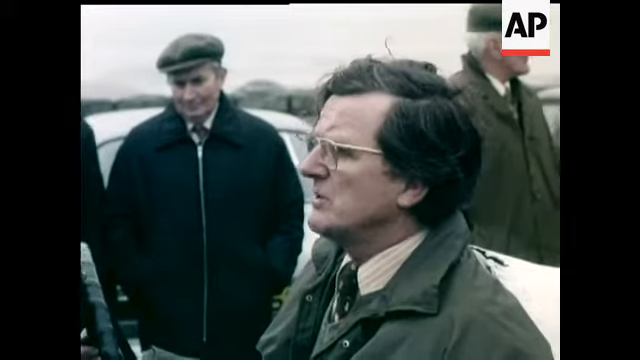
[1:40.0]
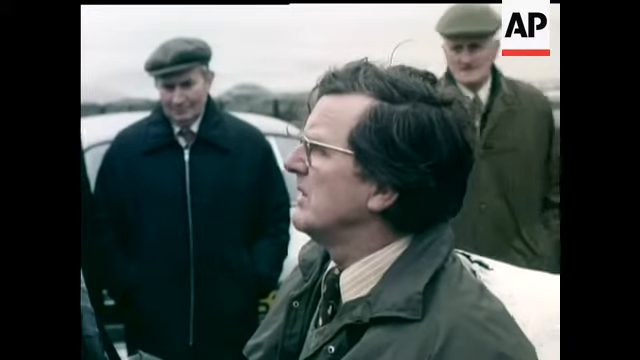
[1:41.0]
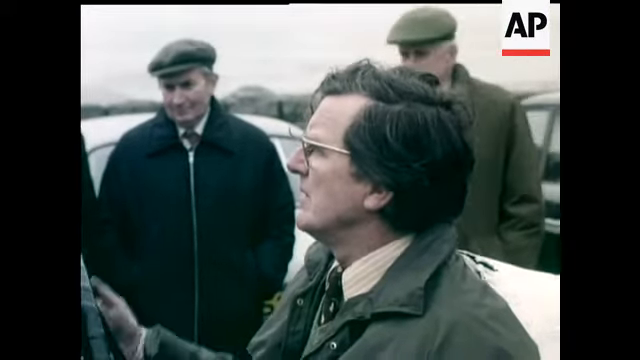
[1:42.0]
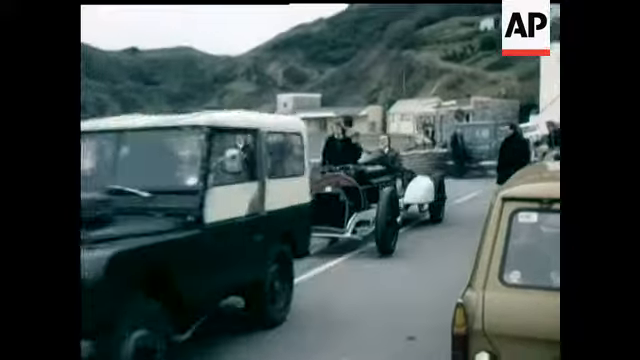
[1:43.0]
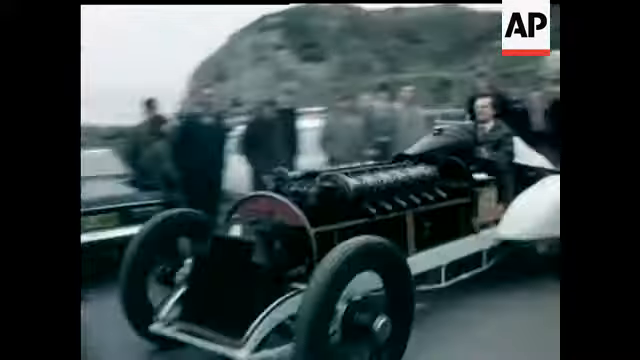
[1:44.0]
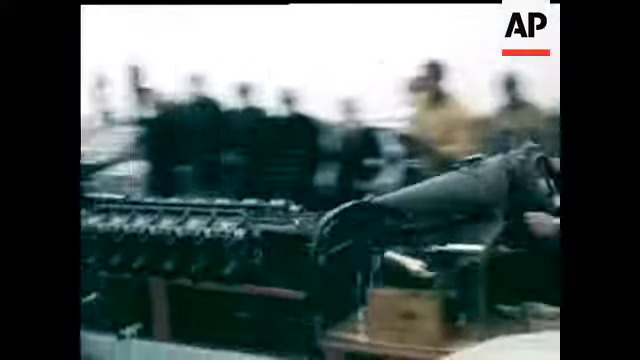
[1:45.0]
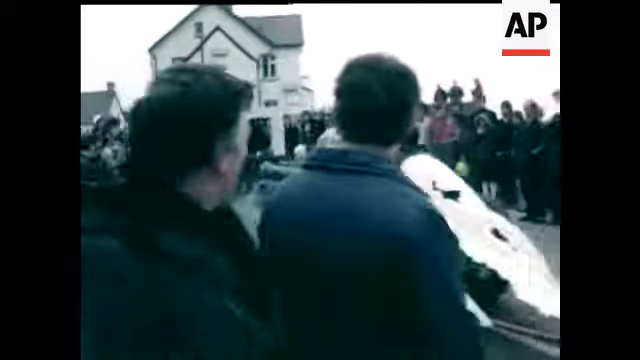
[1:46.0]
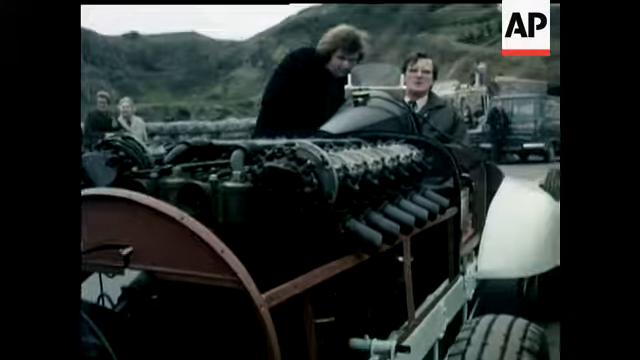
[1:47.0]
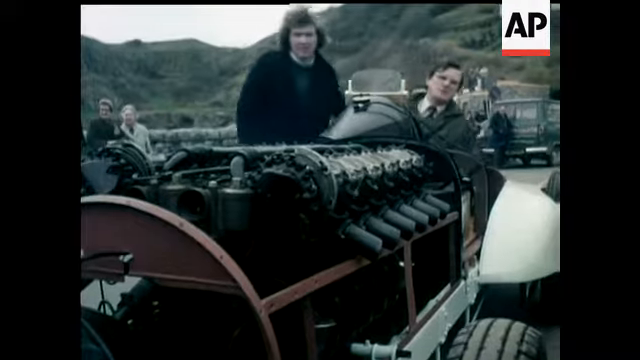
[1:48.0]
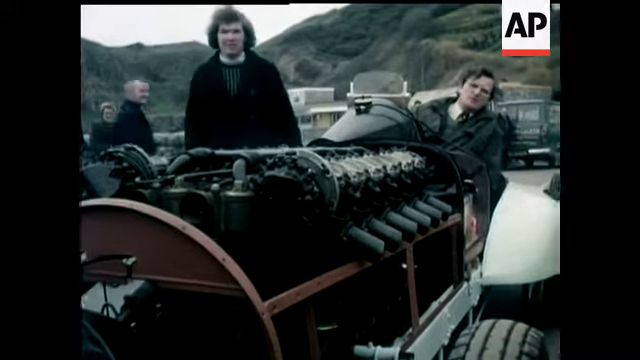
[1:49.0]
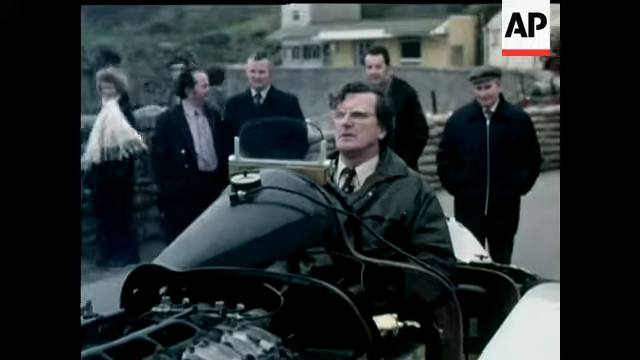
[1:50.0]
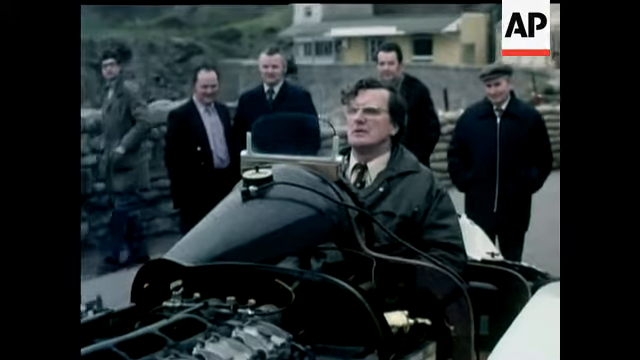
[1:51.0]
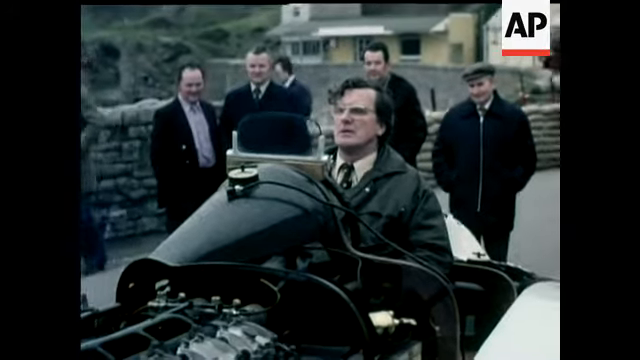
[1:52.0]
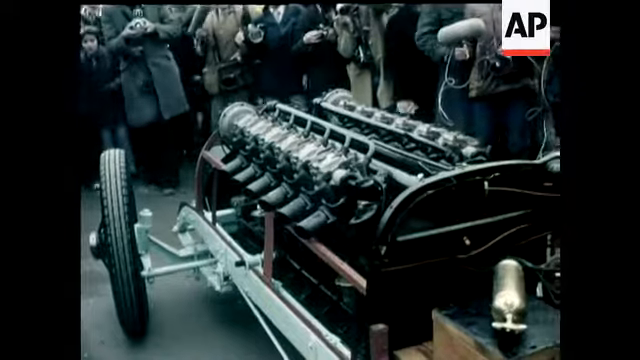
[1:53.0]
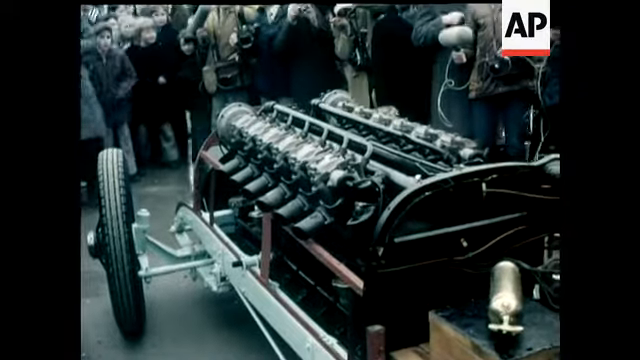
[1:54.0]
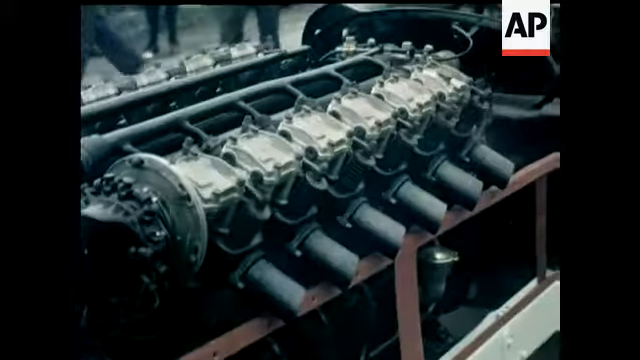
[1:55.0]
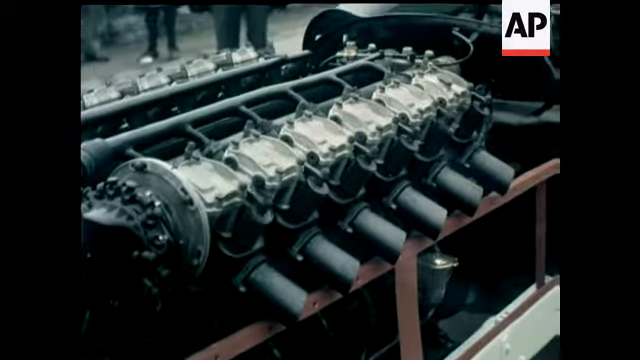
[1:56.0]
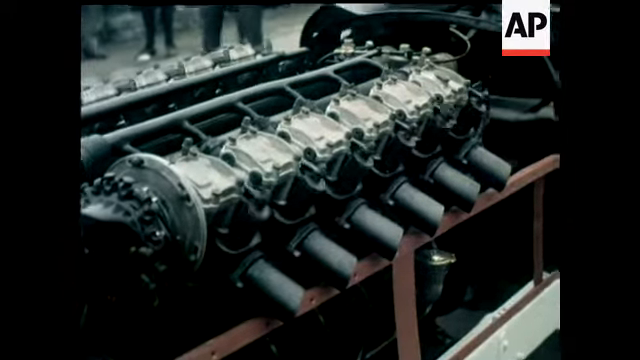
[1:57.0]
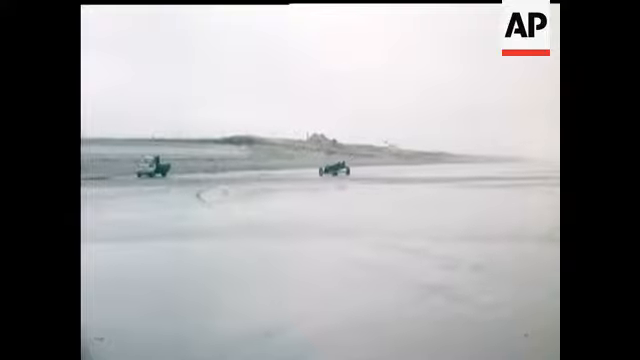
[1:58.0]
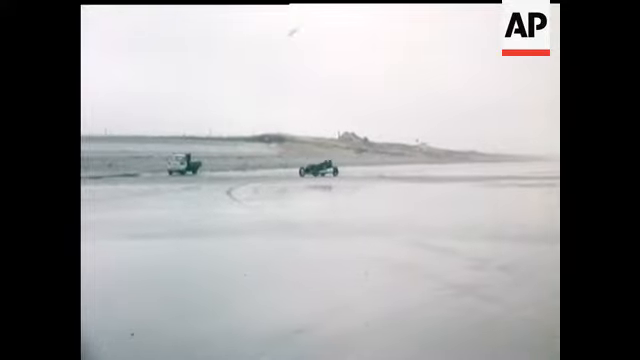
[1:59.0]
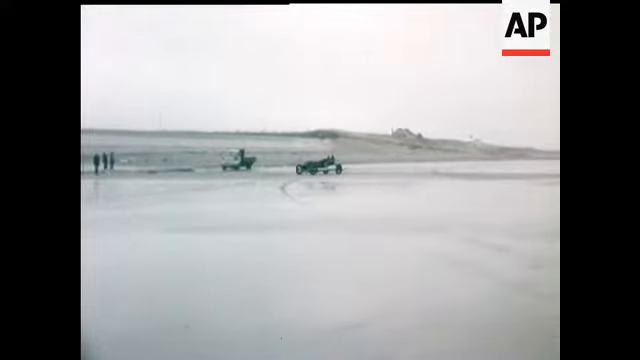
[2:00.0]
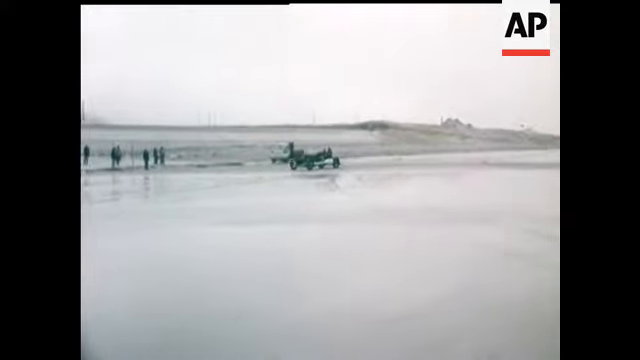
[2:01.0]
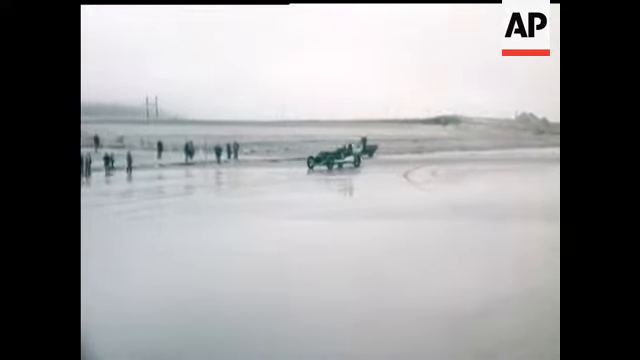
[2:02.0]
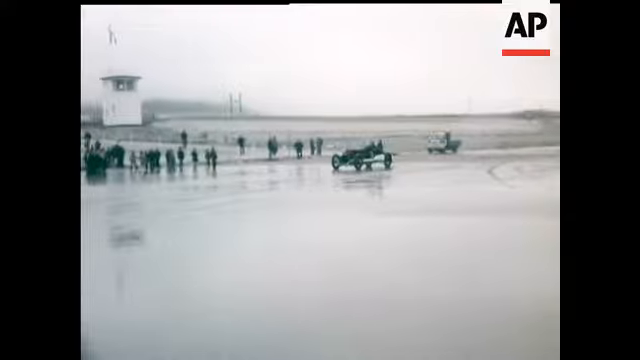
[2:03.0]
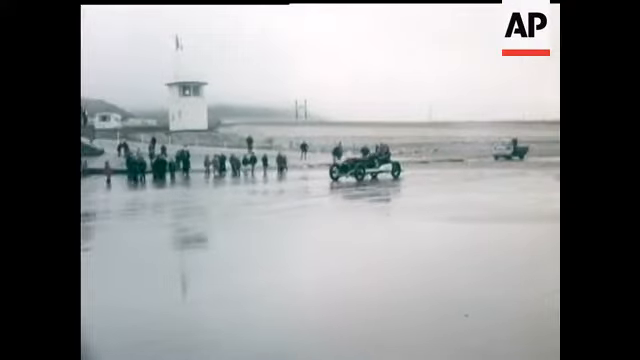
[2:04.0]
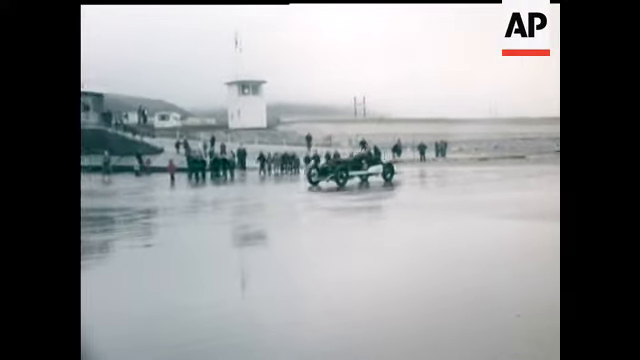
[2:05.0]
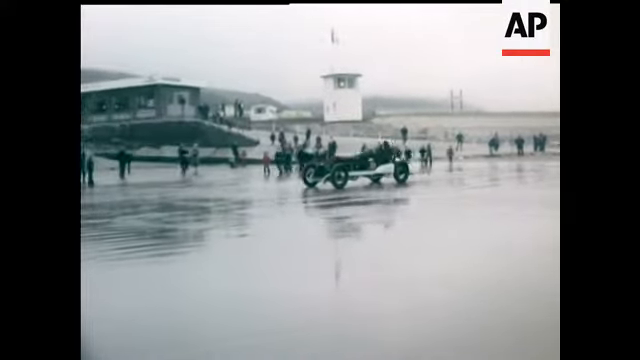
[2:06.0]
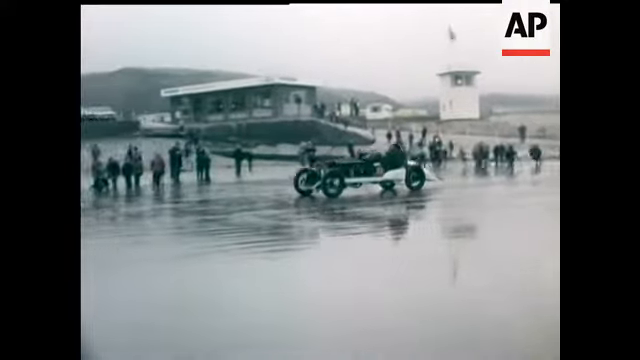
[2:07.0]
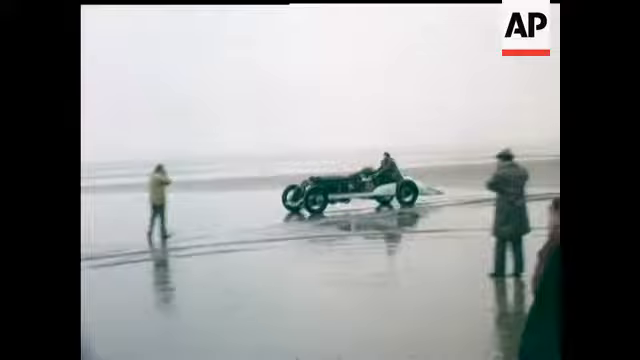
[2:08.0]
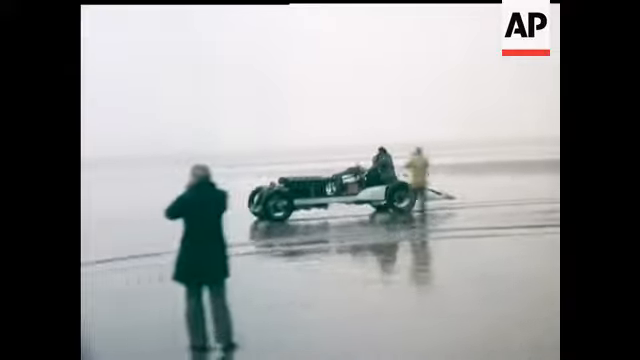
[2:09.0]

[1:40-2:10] The man behind the wheel appears to be speaking. The drag racer is pulled forward by another vehicle, with people lining both sides of the street. The man behind the wheel then appears to be trying to start the engine. The engine is completely exposed, with no hood whatsoever; it is long and takes up most of the chassis. A person stands to the left of the vehicle, and both appear to be Caucasian. The man behind the wheel looks like the man who was at the site where the car was buried in mud. The footage is in color, so it was apparently filmed at a later date. The engine is clearly on, as the pistons seem to move up and down rapidly. The man then takes the car for a stroll on the beach near a crowd of spectators.